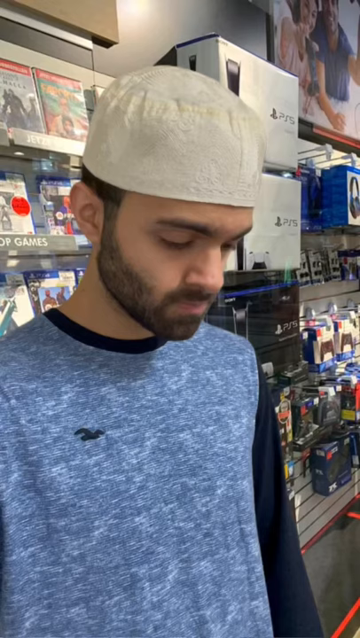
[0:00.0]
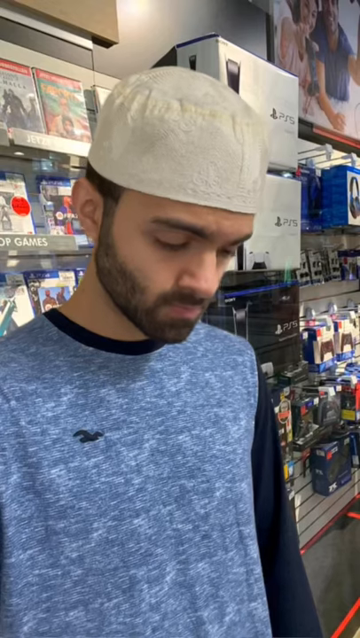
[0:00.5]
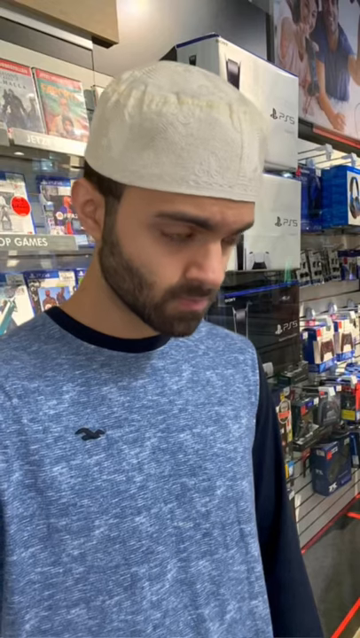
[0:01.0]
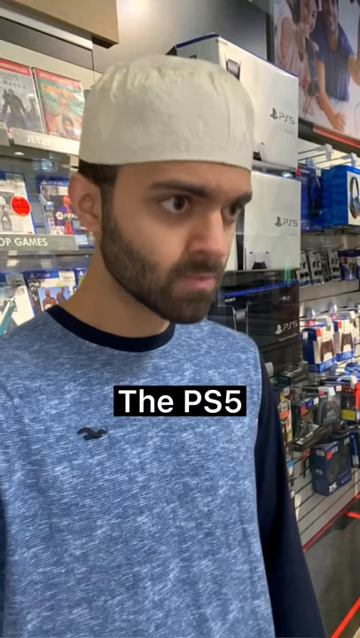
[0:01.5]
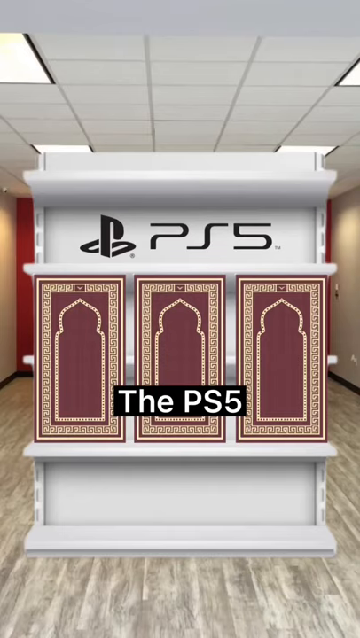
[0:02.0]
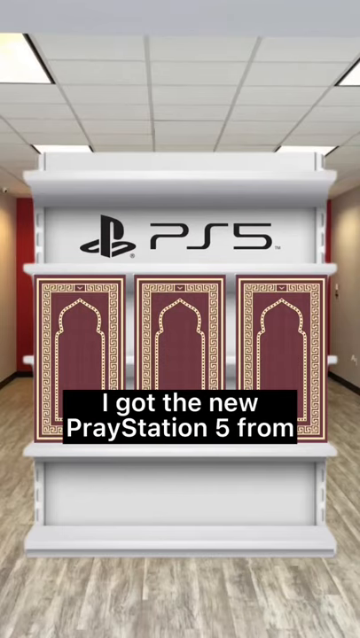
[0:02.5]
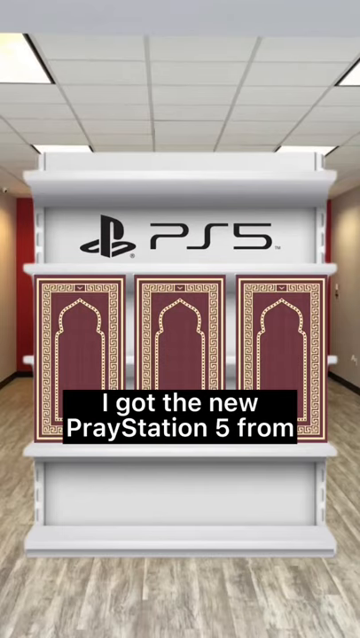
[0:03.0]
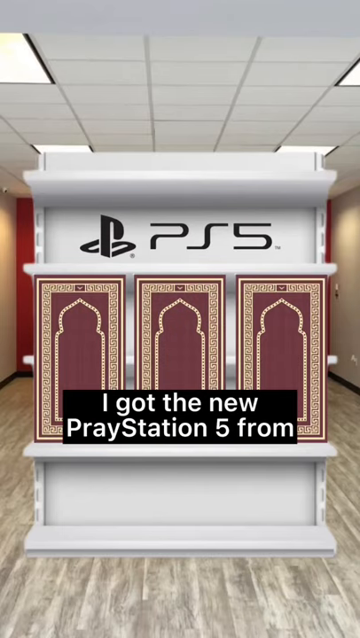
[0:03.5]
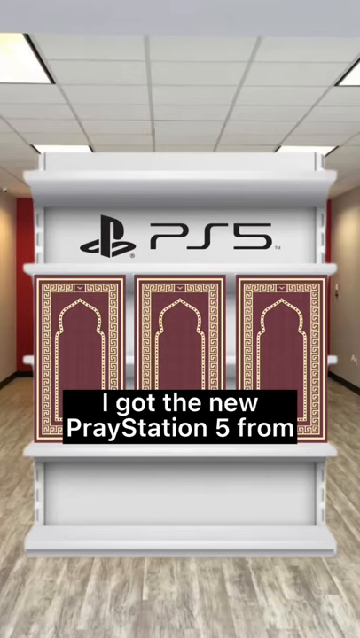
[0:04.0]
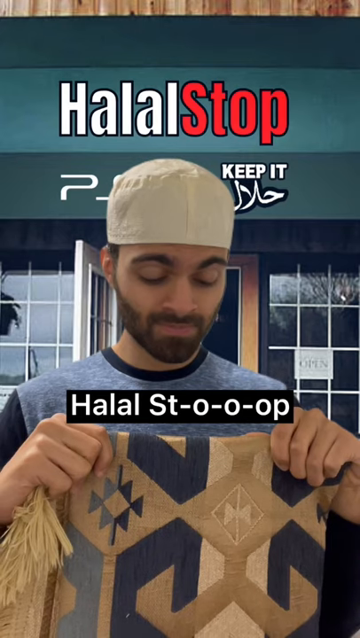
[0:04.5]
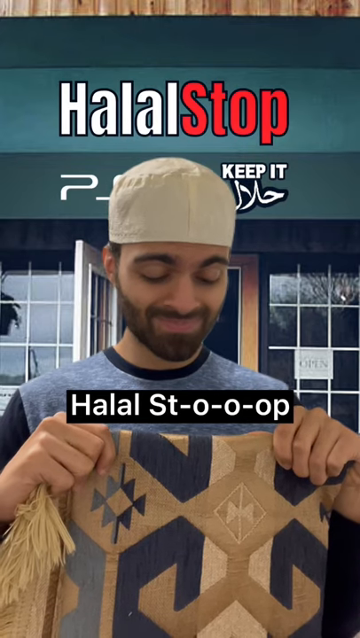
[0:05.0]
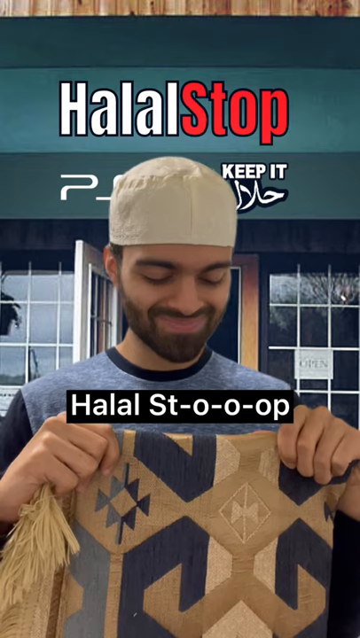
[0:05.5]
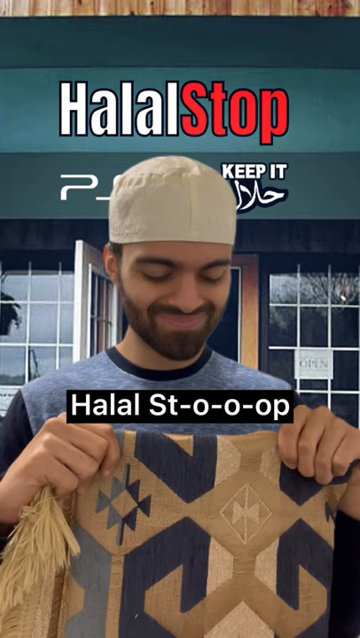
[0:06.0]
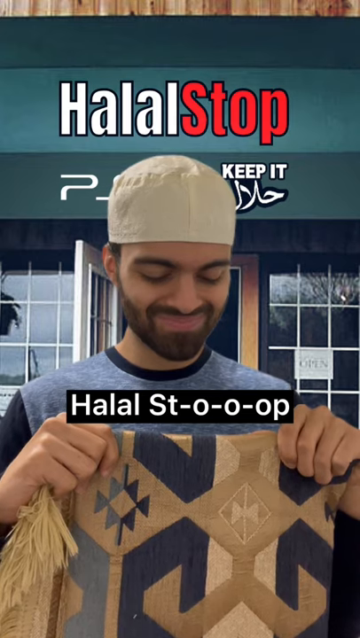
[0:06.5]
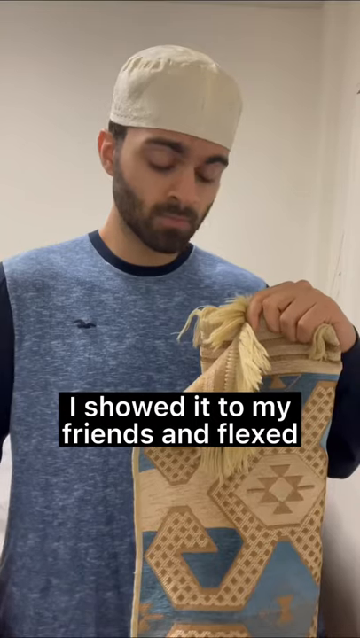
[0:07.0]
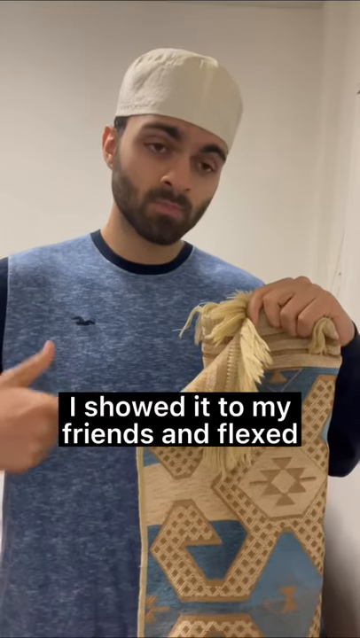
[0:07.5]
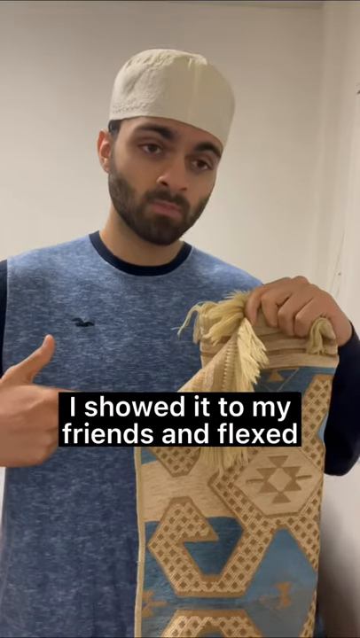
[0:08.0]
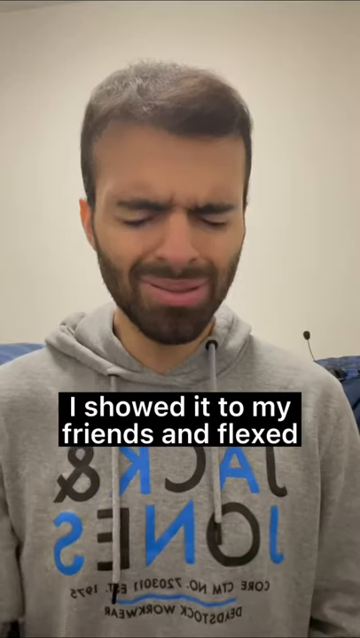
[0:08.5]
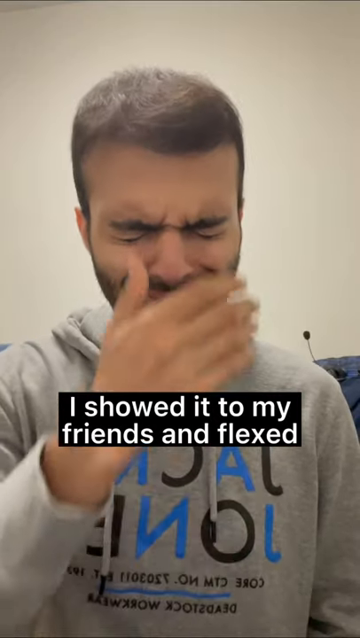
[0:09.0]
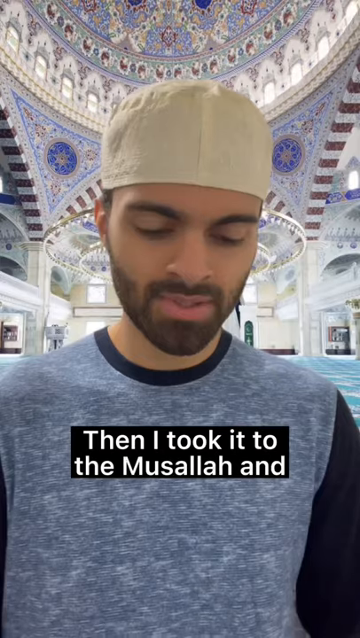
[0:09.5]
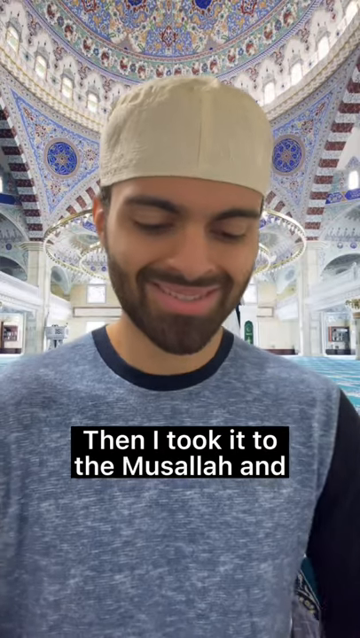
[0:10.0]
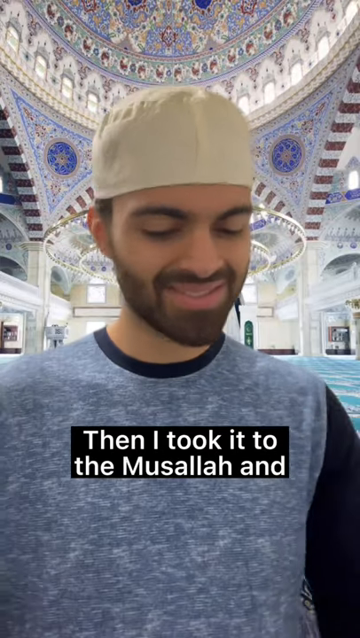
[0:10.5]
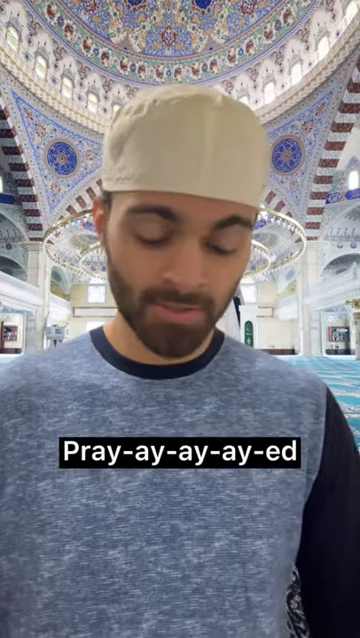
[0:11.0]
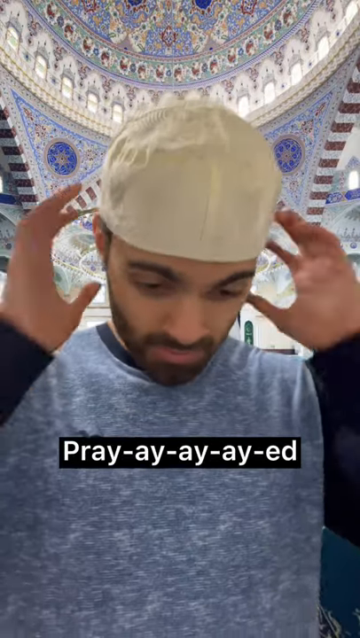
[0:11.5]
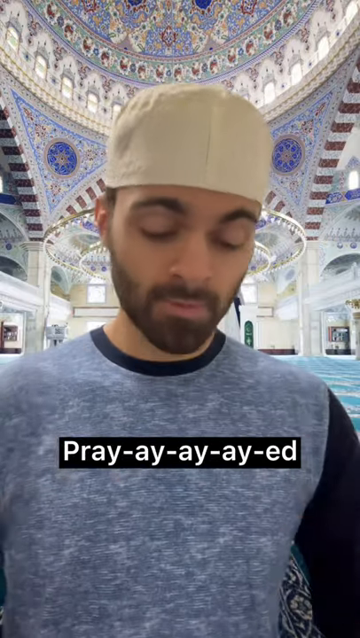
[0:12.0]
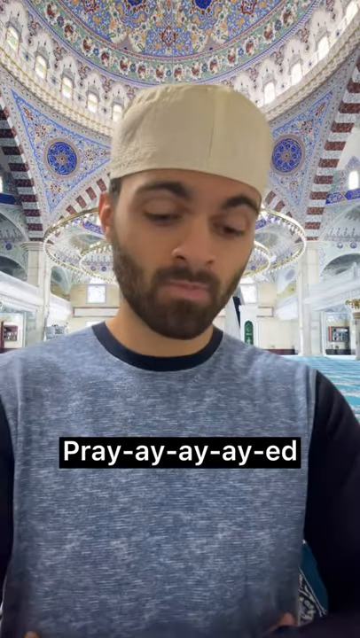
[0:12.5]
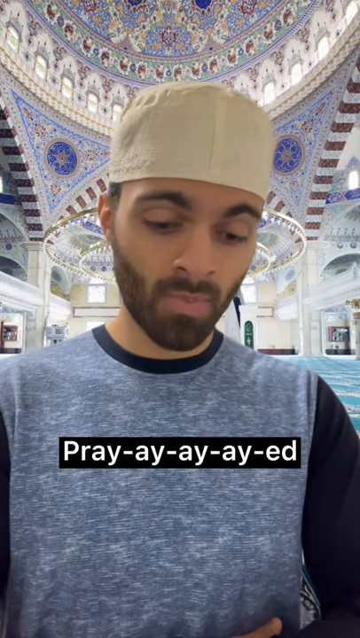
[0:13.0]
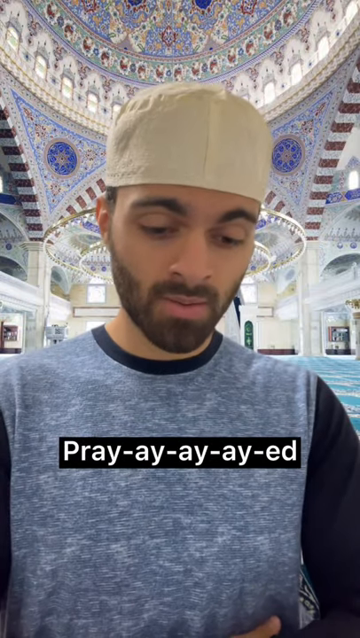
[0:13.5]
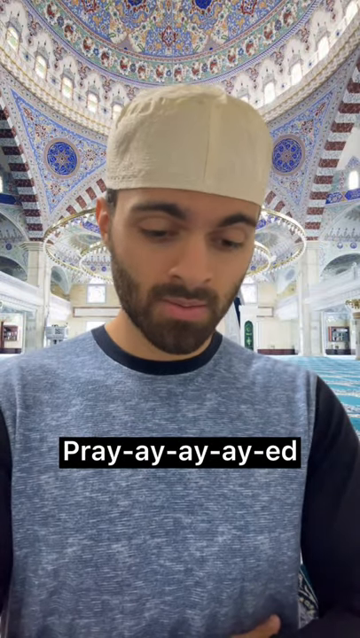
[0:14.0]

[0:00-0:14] In a short, comedy-type video, a man wearing a Muslim cap and a long-sleeved shirt, with a short trimmed beard, appears to be in some sort of store. At a store called the Halal stop, he sees something called the PS5, the Prey station, which sort of has a form reminiscent of a mosque. He brings out his prayer rug, shows it to his friends and flexes, and then prays. A cutaway shot shows the friend, who seems embarrassed for the main character who bought the Prey station 5.